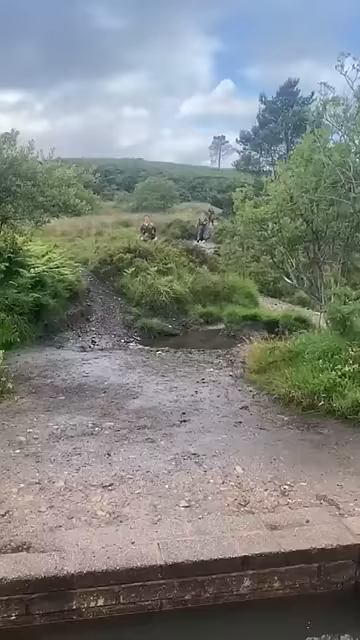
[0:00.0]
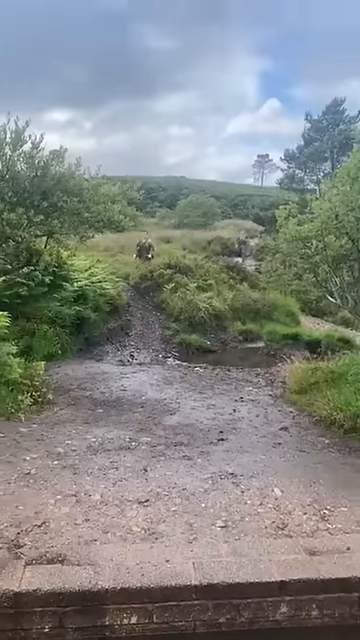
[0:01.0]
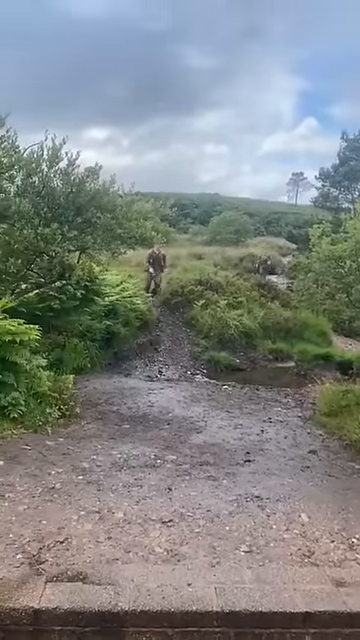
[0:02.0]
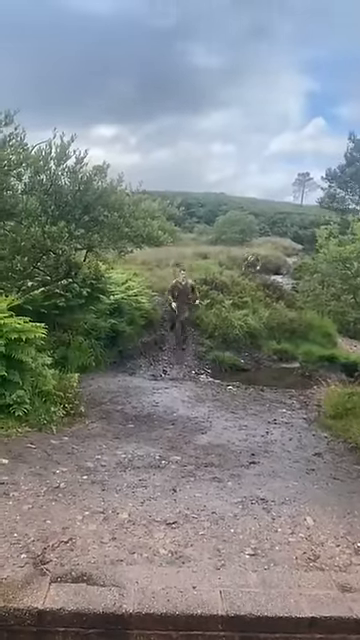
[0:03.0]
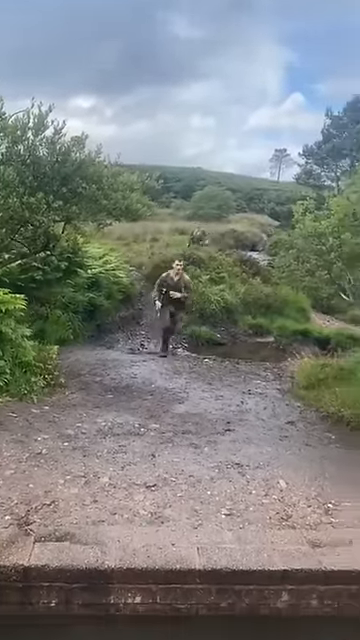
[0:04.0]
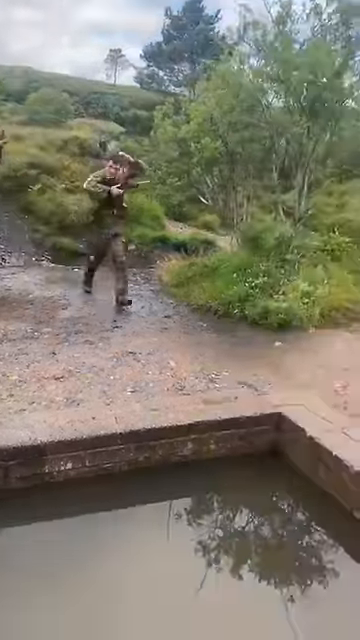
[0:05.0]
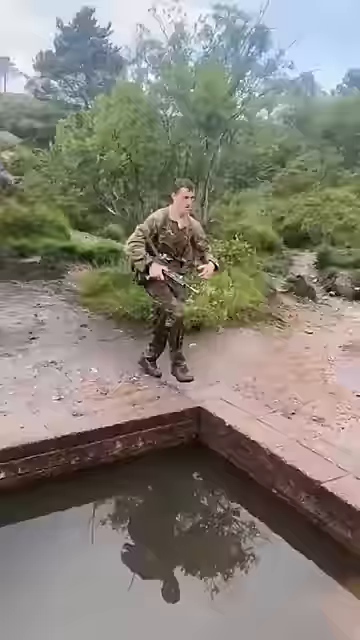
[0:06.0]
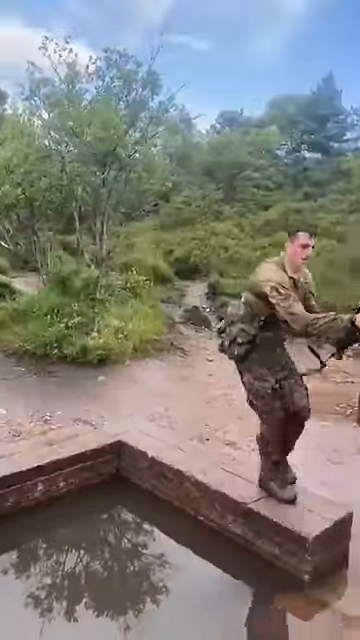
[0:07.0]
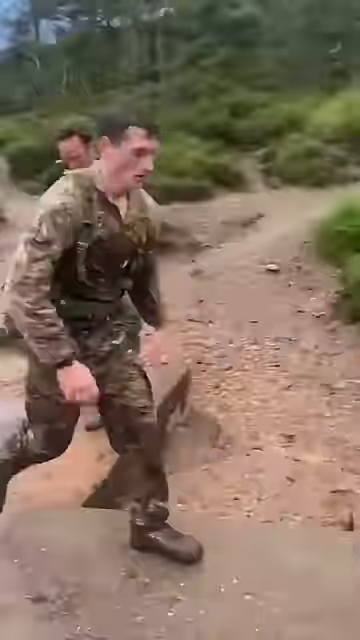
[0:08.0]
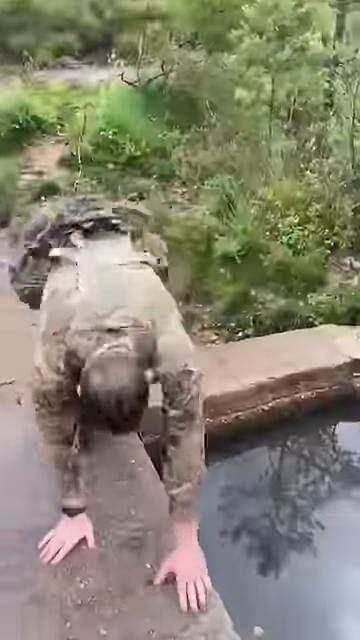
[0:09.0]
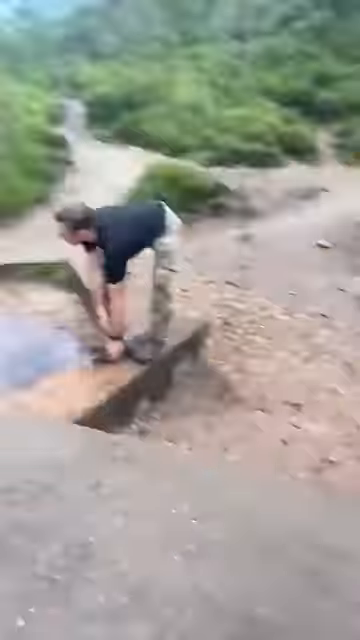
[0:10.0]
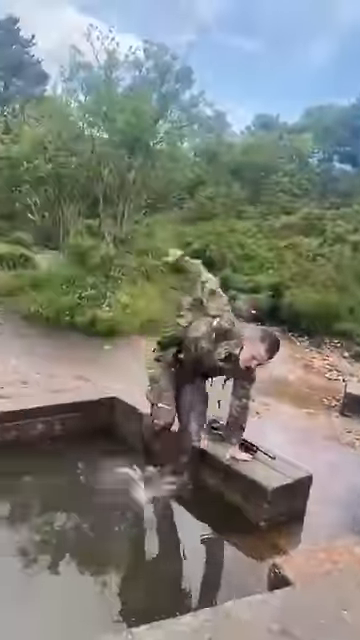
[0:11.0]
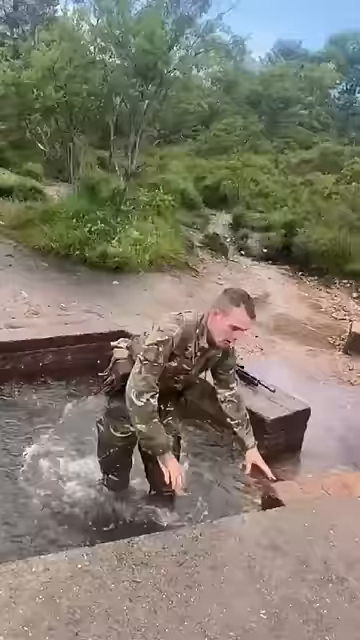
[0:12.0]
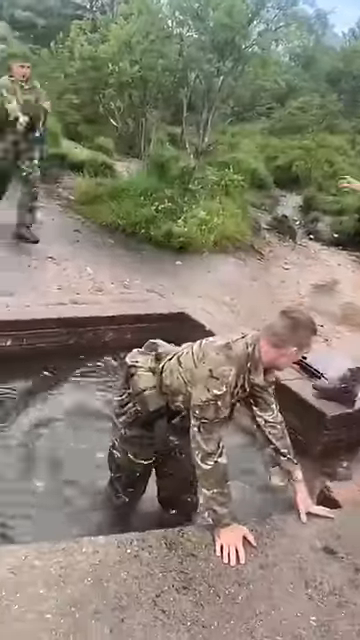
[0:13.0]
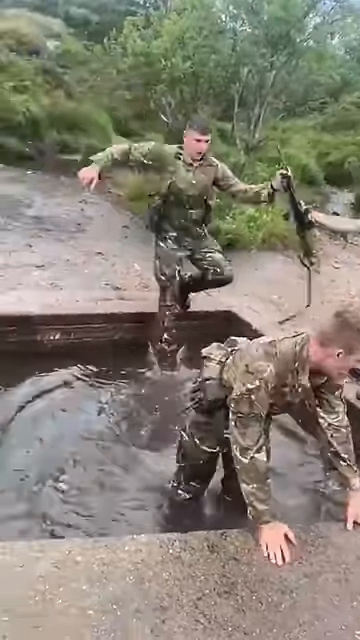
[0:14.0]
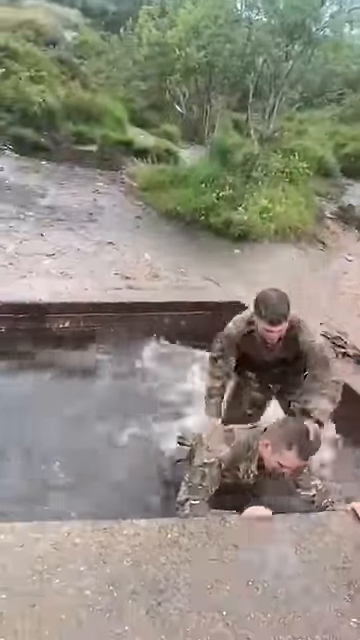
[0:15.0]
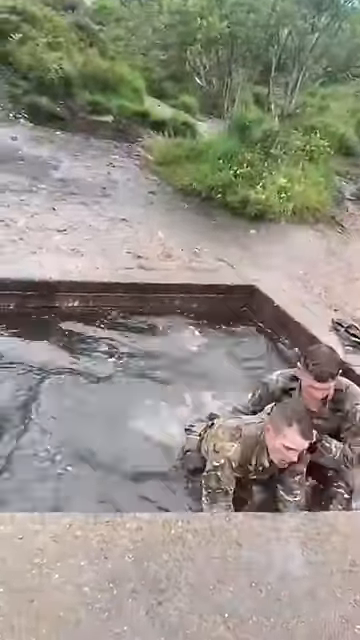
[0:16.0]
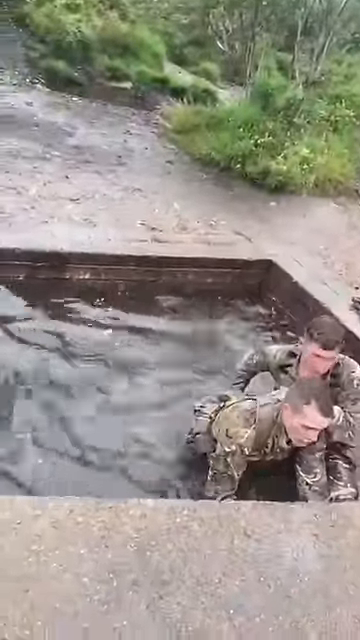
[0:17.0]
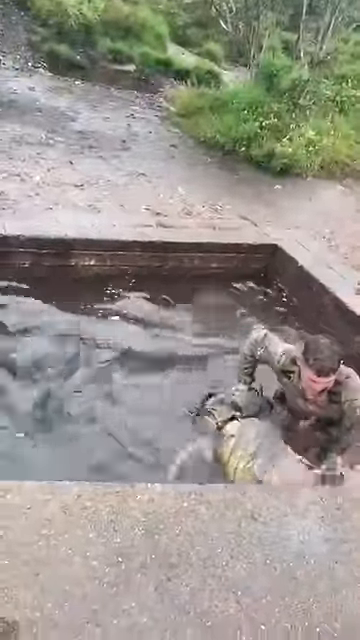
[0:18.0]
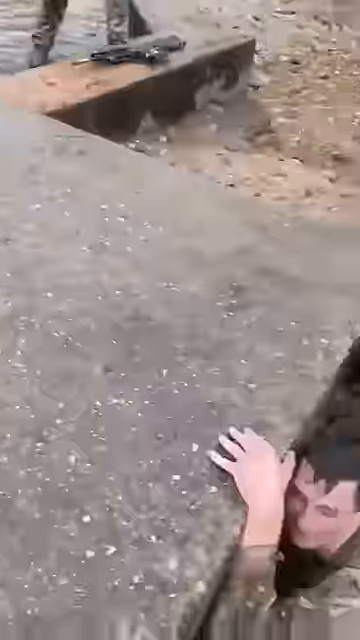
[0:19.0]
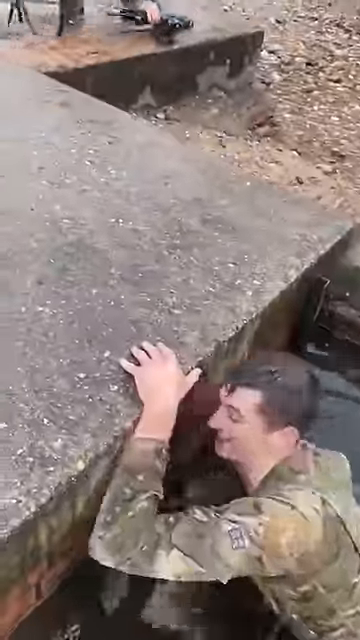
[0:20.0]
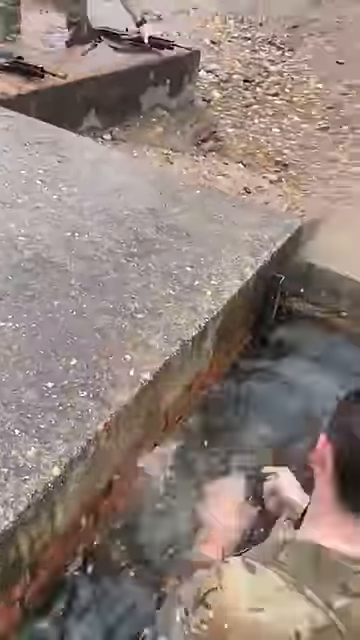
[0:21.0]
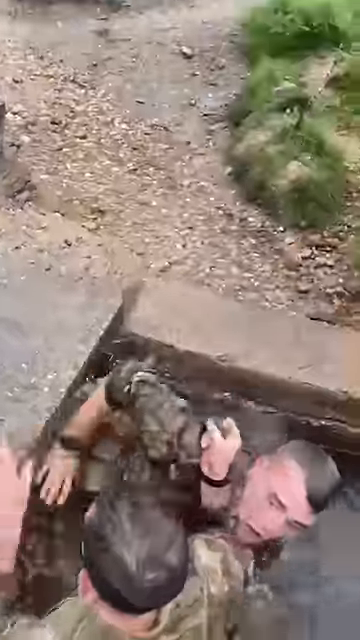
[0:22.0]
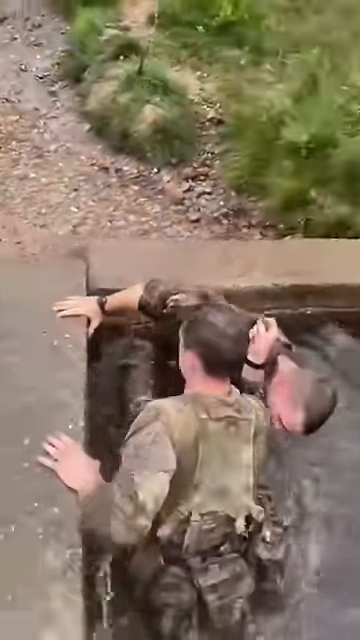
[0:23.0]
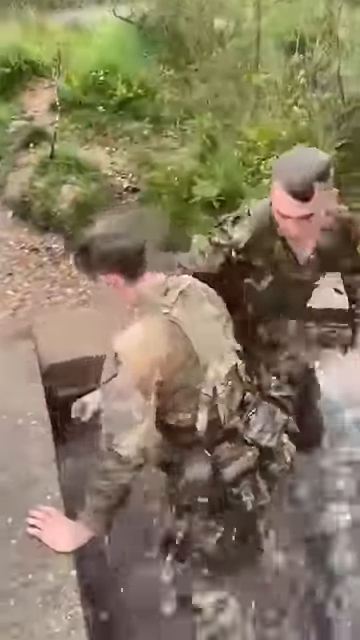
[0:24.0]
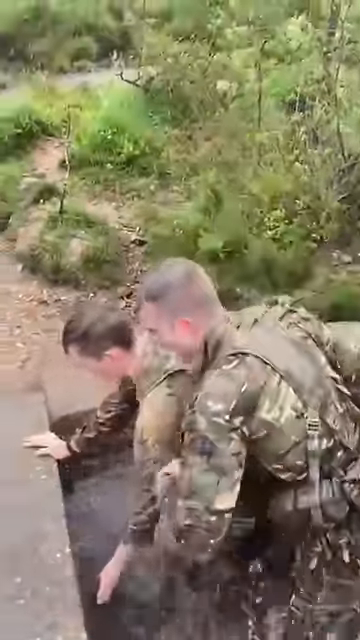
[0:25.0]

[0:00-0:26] On-screen text reads "Royal Marines Sheep Dip." A white man in military camouflage jumps into a pool, dunks, and then jumps out. One man in camouflage then pushes another man in camouflage underneath what looks like a cement bridge, in what appears to be some kind of marine training exercise. They are all wearing full gear with belts and leather straps around their waists, and they hand off their gun to someone else on the way into the water. The pool looks shallow. The man pushes the other underwater and pulls him up on the other side, and they run through lush green gardens.